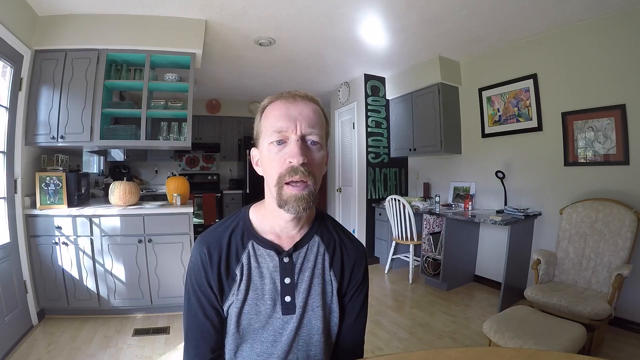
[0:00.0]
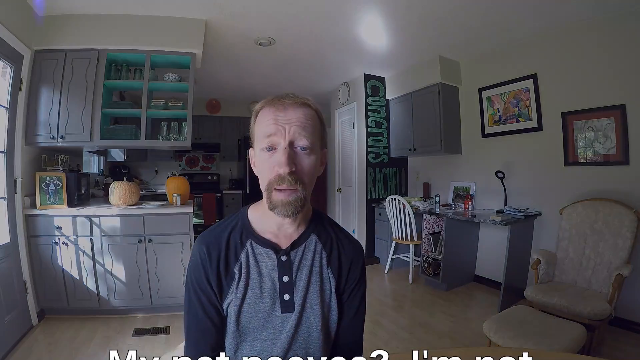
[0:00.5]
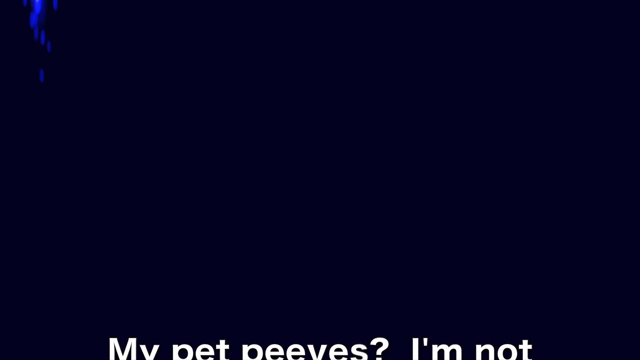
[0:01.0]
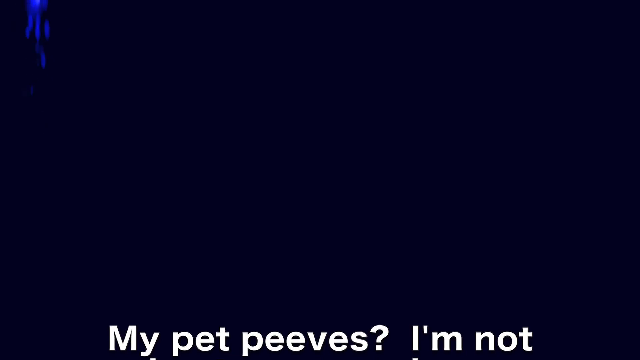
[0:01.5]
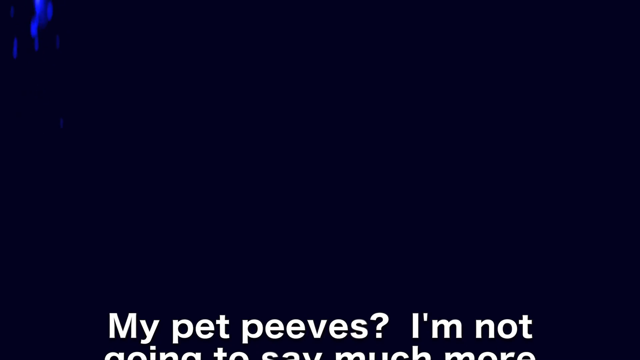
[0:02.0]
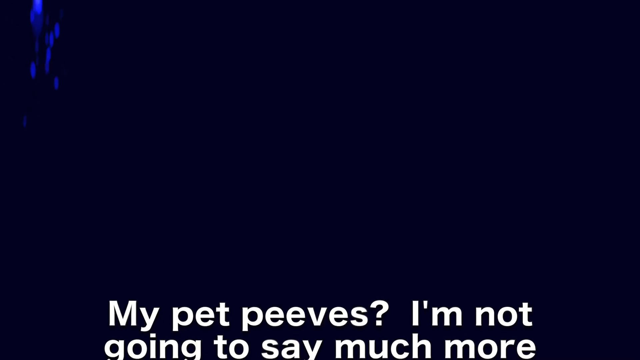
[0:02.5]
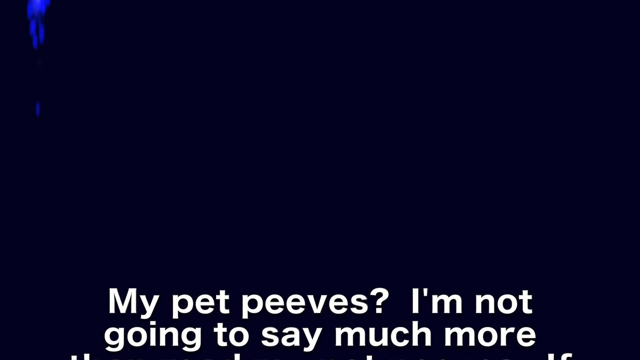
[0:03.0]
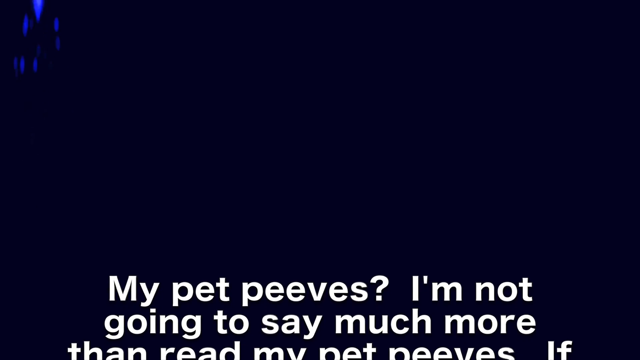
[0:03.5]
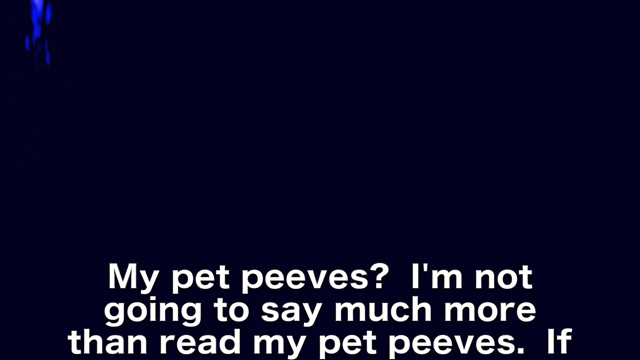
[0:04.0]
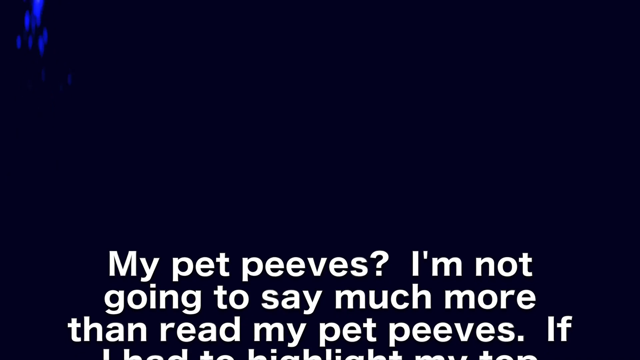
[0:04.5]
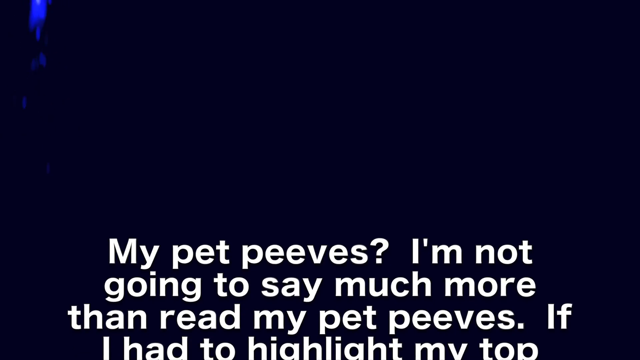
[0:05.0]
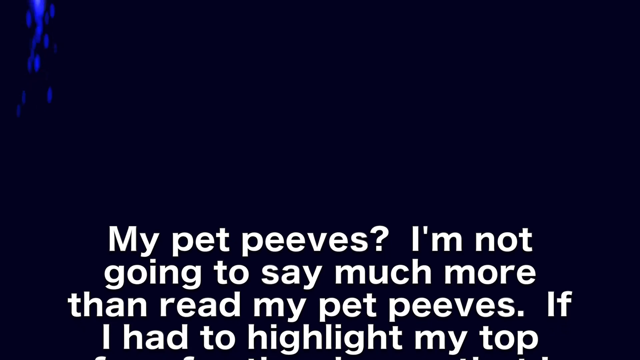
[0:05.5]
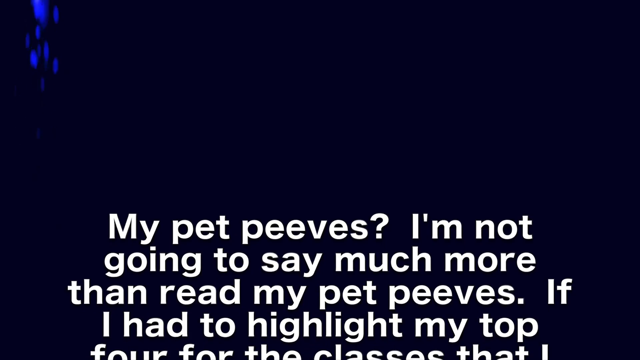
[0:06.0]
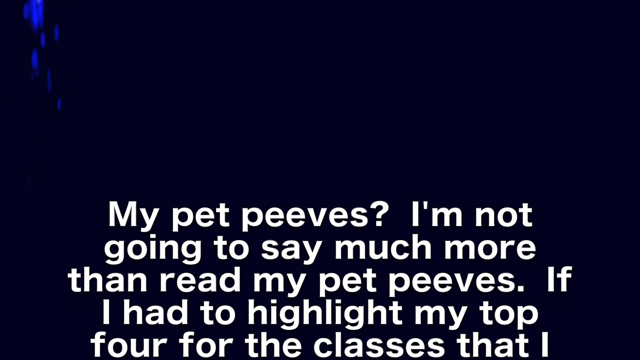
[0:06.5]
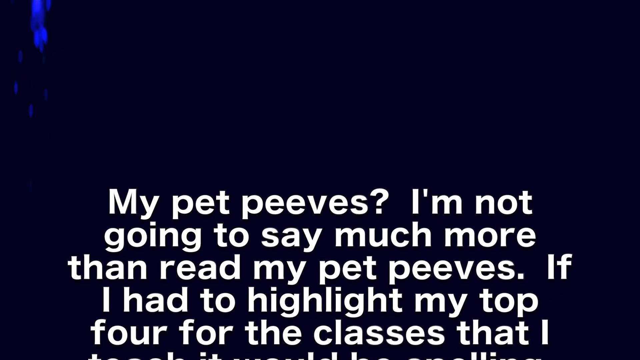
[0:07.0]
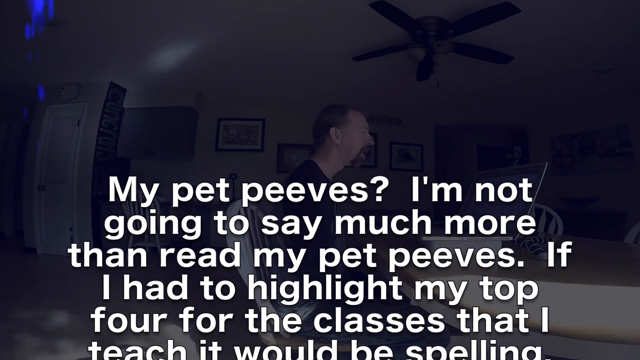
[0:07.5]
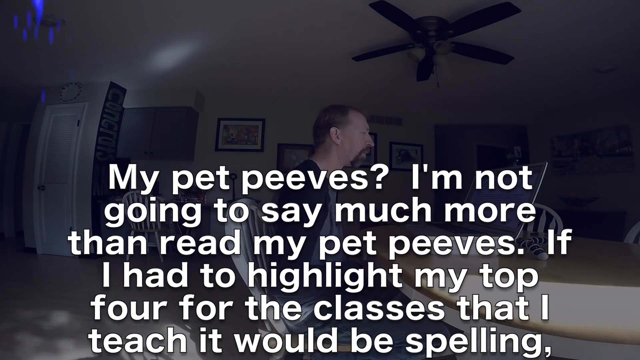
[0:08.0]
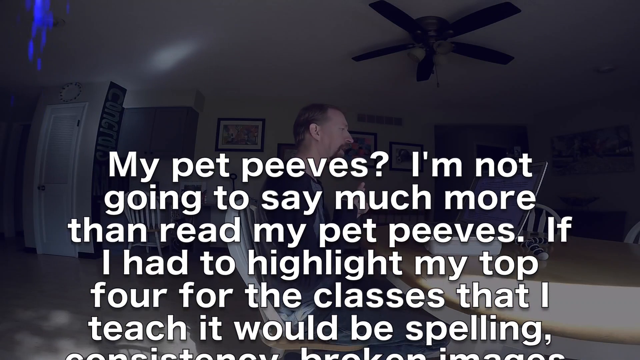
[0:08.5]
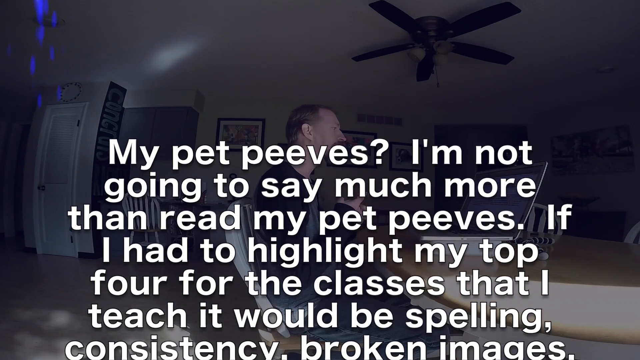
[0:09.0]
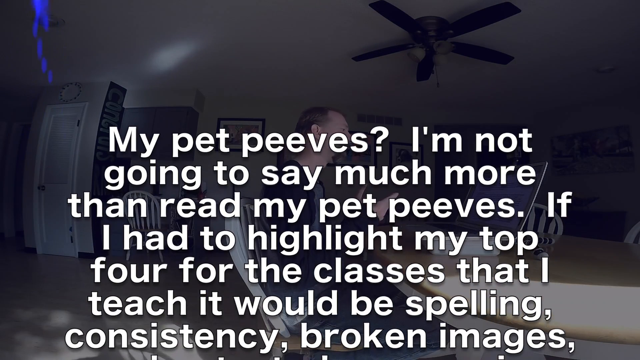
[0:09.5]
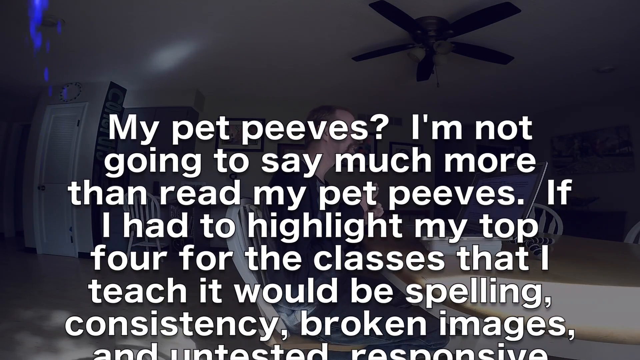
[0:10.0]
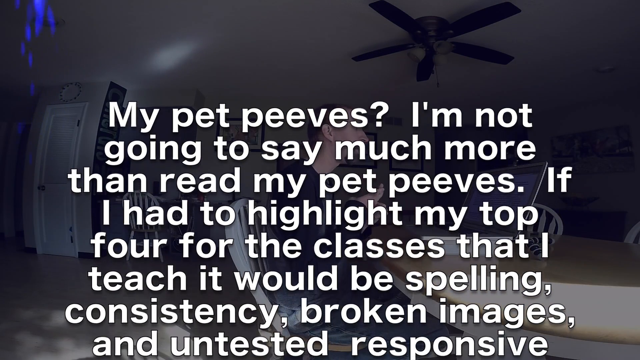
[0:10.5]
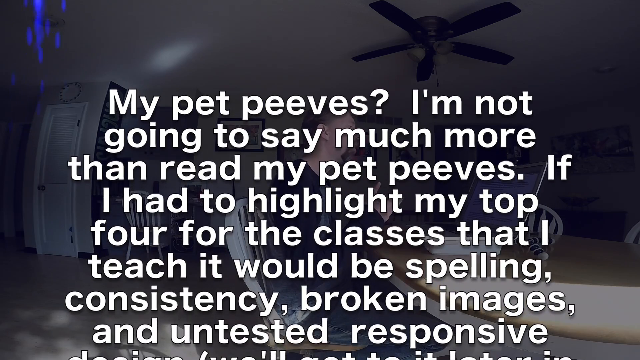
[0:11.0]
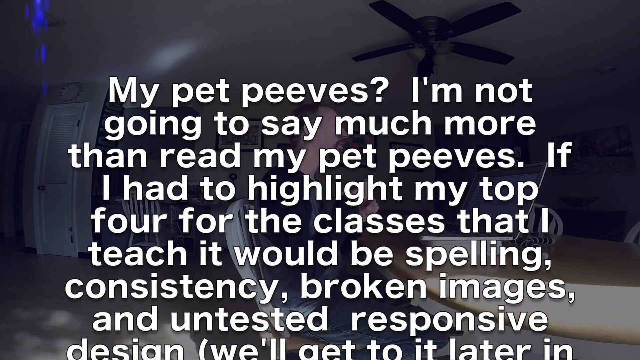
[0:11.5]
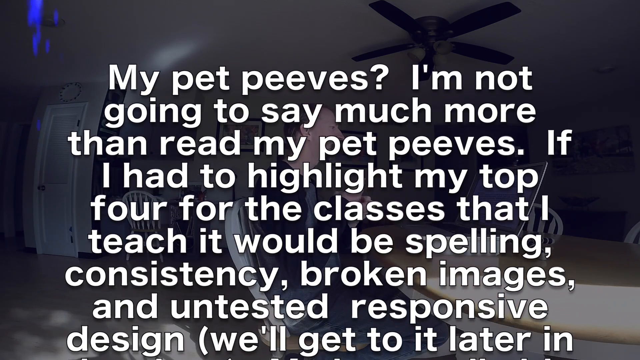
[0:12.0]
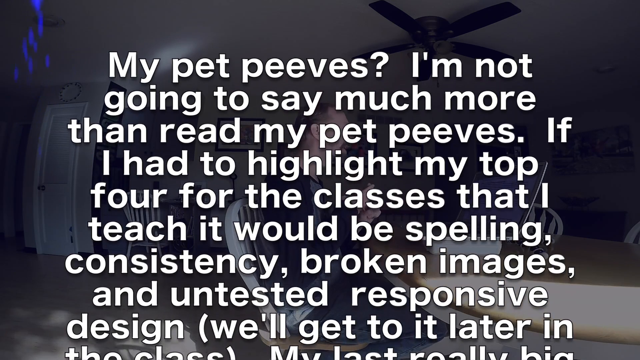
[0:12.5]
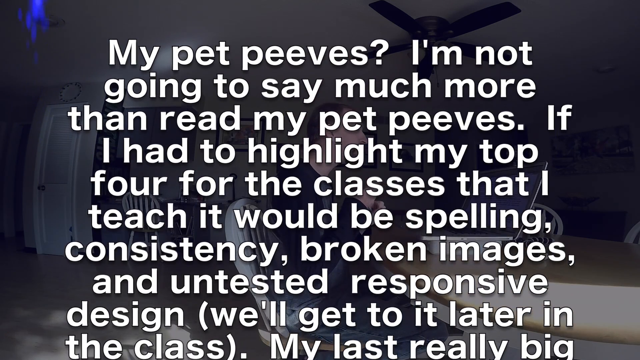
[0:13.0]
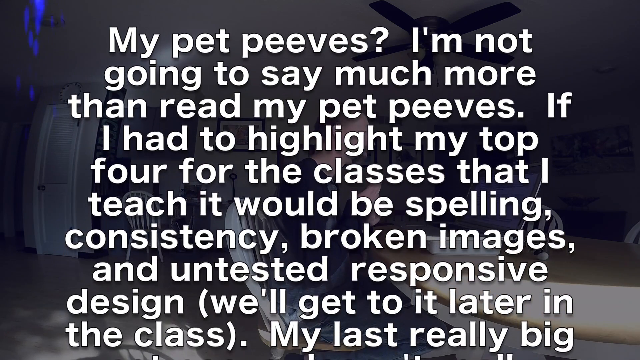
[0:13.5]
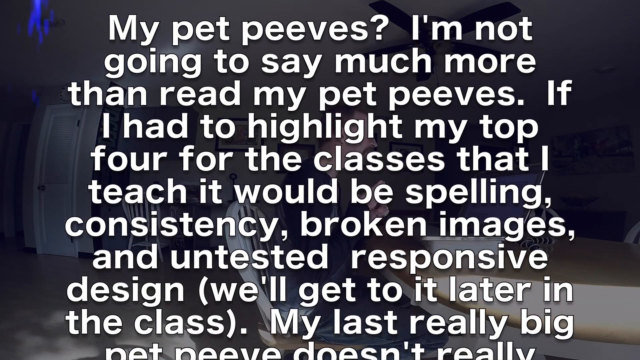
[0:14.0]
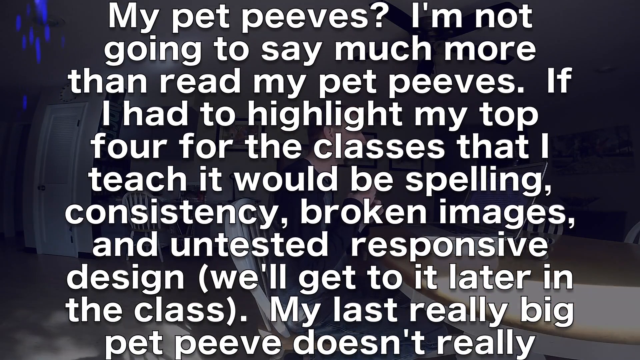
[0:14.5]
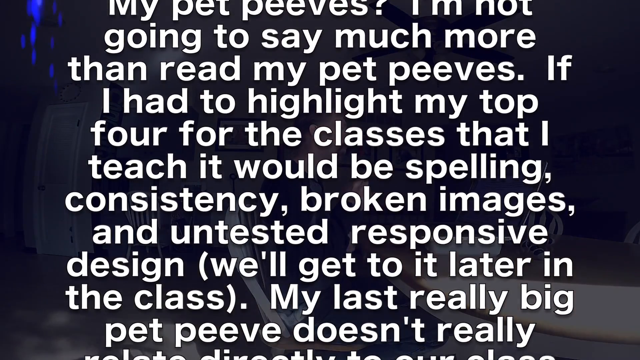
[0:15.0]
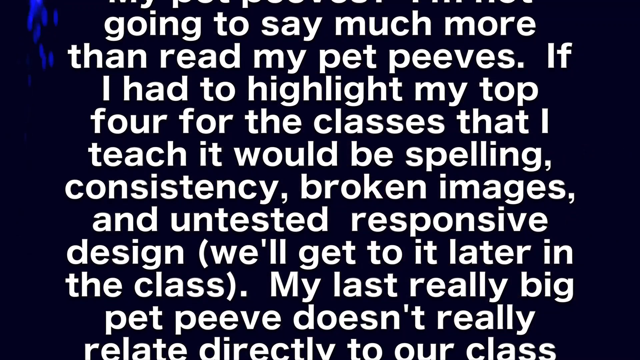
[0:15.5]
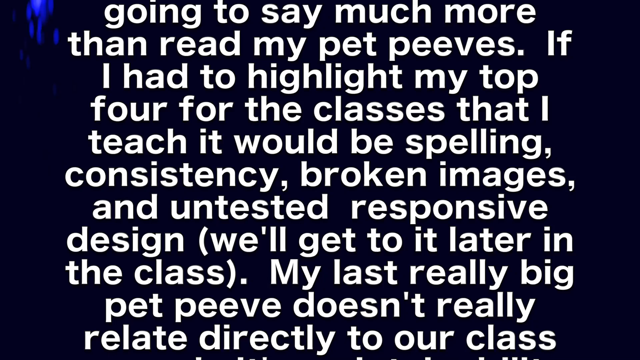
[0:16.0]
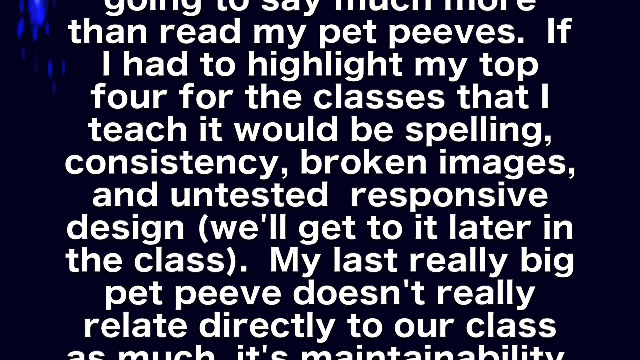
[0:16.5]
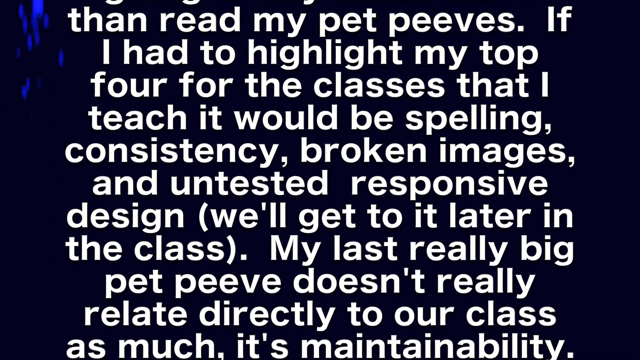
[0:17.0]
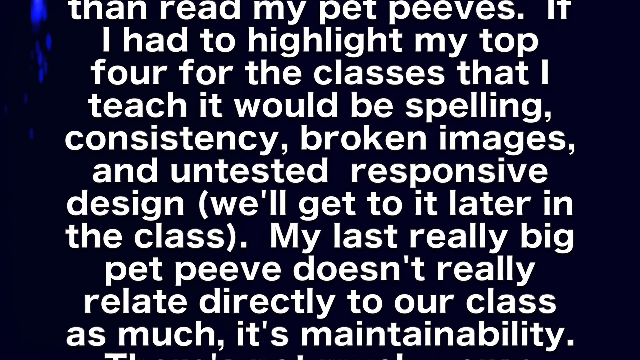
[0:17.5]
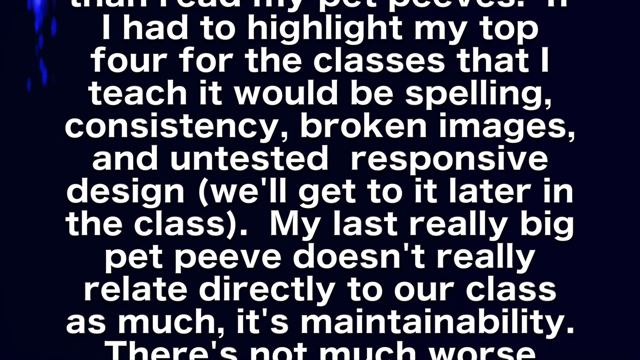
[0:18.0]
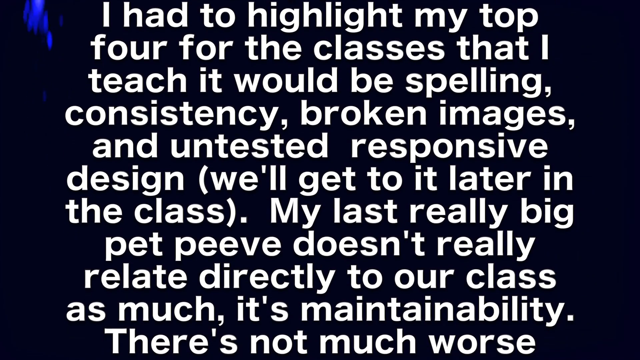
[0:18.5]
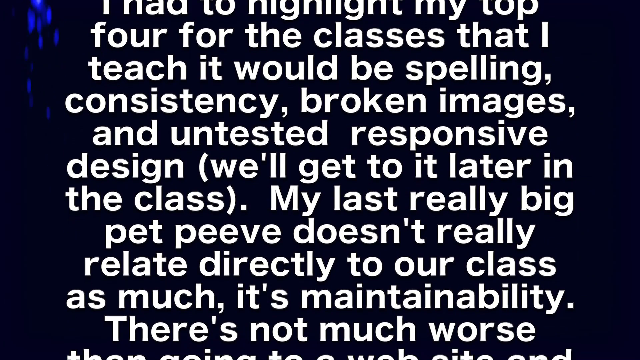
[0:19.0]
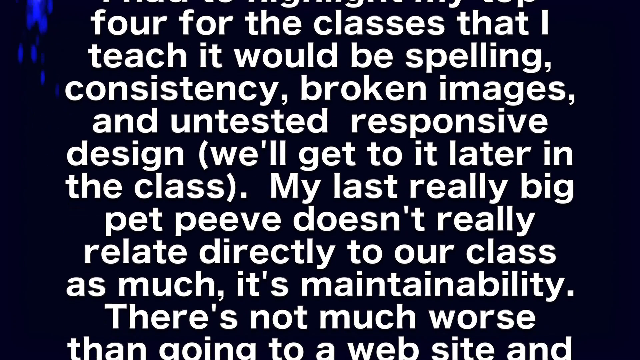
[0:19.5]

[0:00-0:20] A man is seated in the center of the screen, apparently in an in-home setting. Pumpkins are visible in the background on the countertop, and a picture is positioned on the countertop. He appears to be sitting in a sitting area or dining room, with the kitchen behind him. To his right there sits a chair, and there is a desk with a chair pushed up to the desk. Two pictures hang on the wall to the right of the man. Text then appears on screen over a dark blue and blackish background. The text reads, "My pet peeves. I'm not going to say much more than read my pet peeves. If I had to highlight my top four for the classes that I teach, it would be spelling, consistency, broken images and untested responsive design. We'll get to it later in the class. My last really big pet peeve. It doesn't really relate directly to our class as much. It's maintainability, there's not much worse than going to a website". Behind the text, the man can be seen sitting in a chair, and the camera reveals his left side.